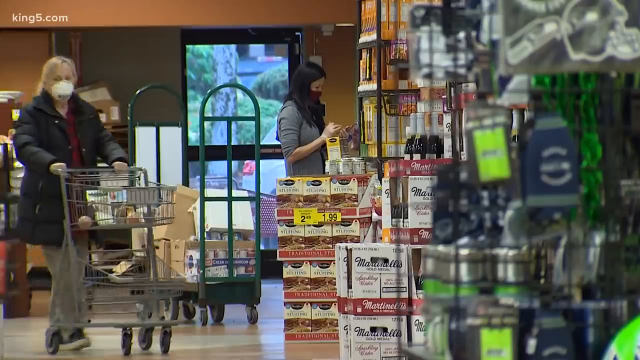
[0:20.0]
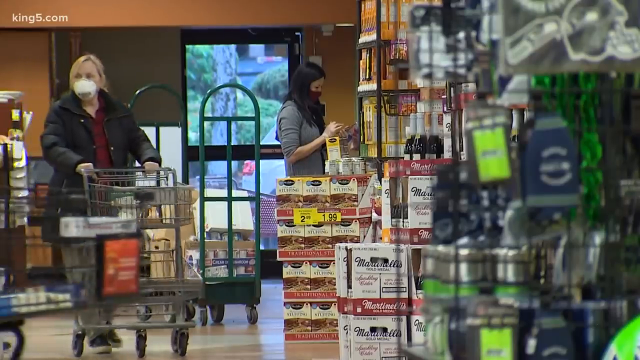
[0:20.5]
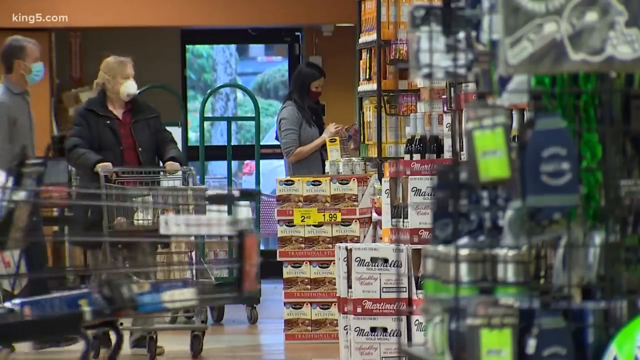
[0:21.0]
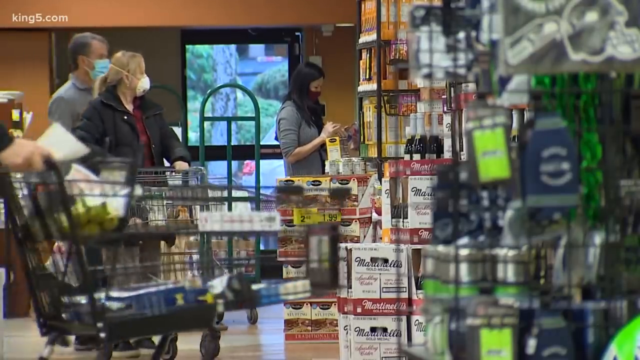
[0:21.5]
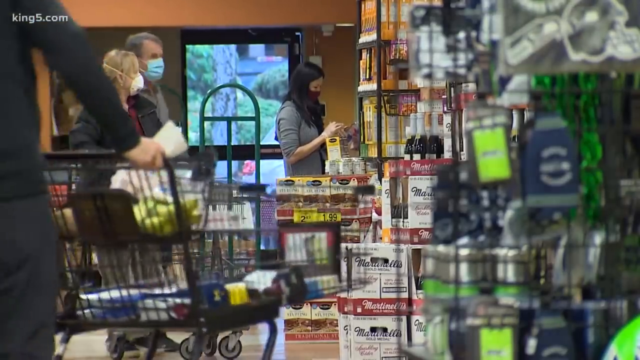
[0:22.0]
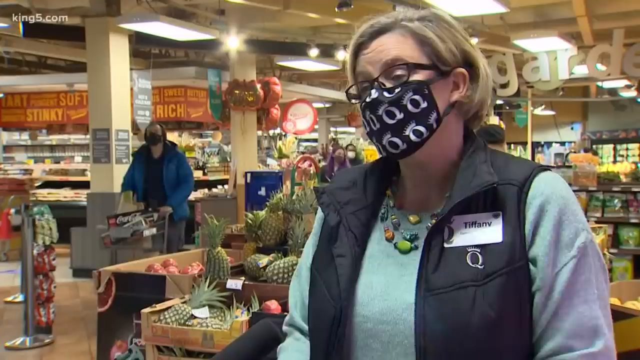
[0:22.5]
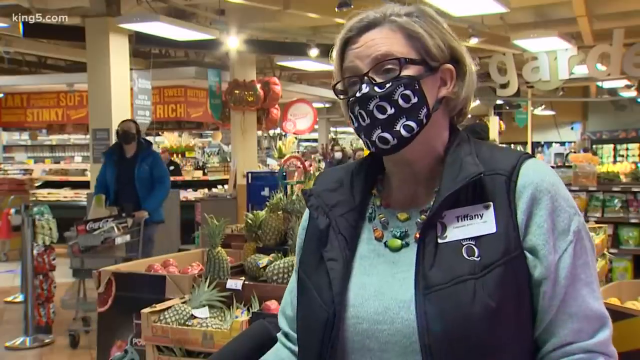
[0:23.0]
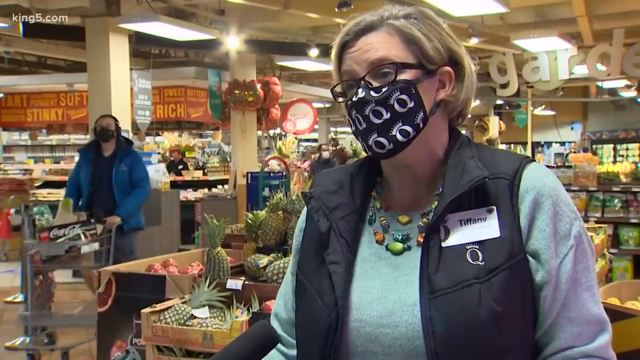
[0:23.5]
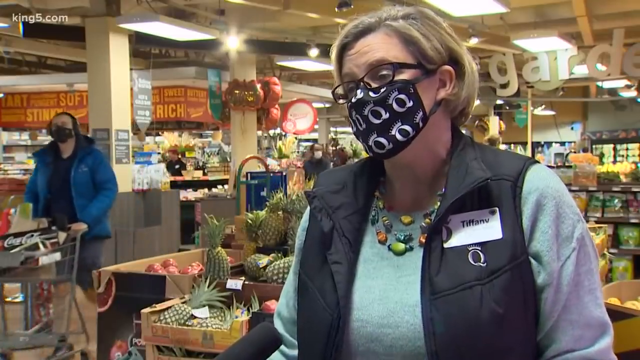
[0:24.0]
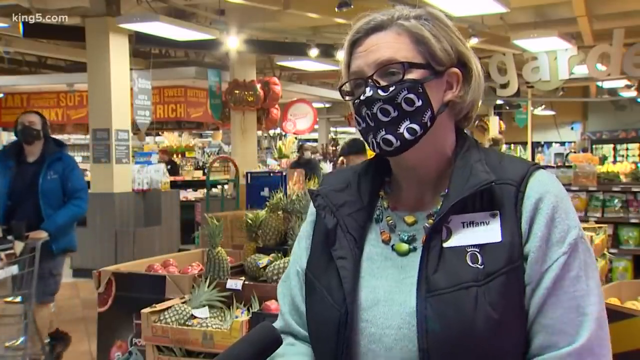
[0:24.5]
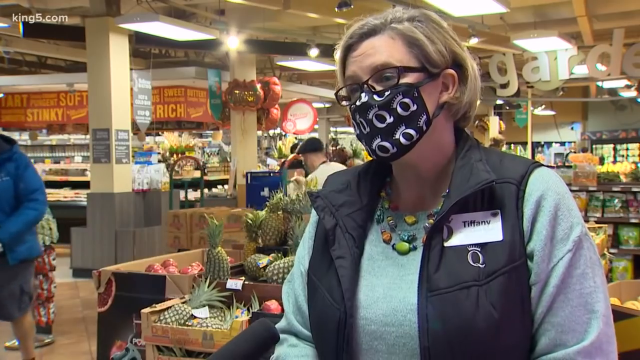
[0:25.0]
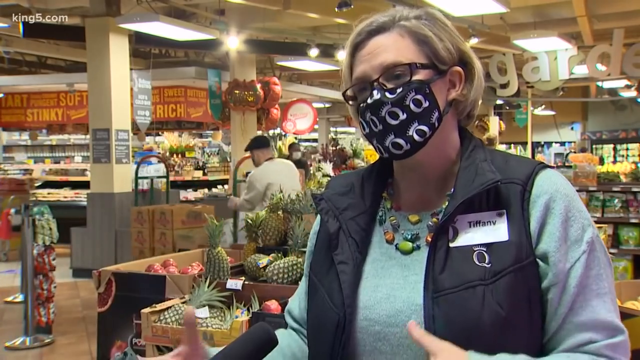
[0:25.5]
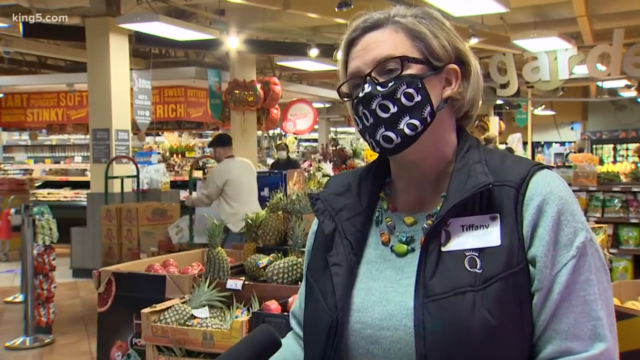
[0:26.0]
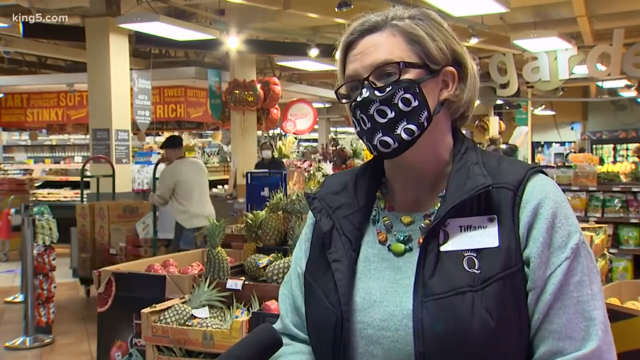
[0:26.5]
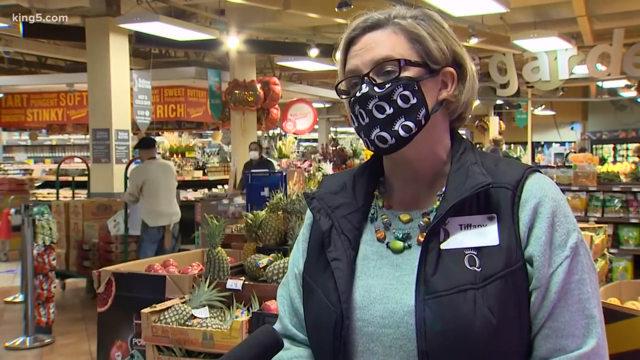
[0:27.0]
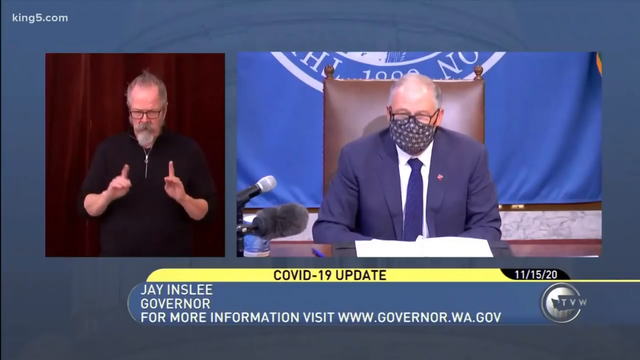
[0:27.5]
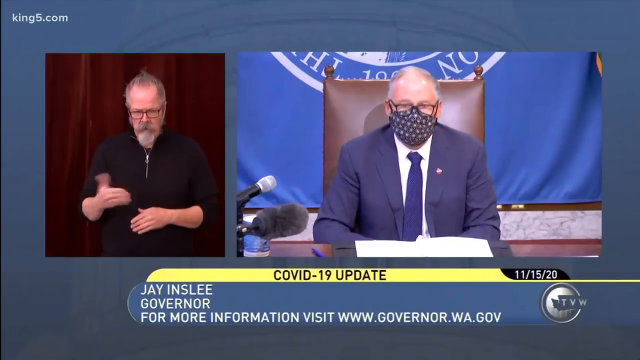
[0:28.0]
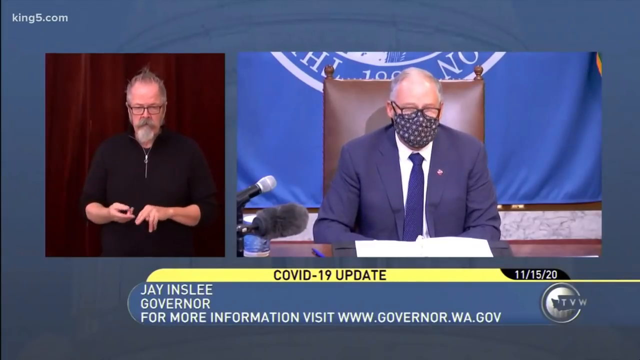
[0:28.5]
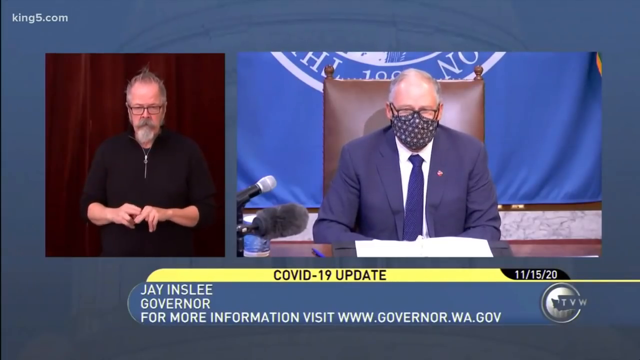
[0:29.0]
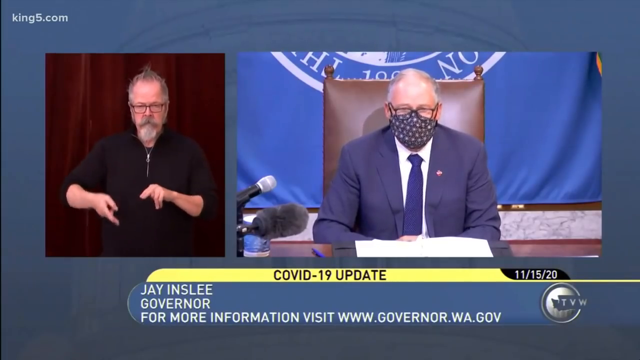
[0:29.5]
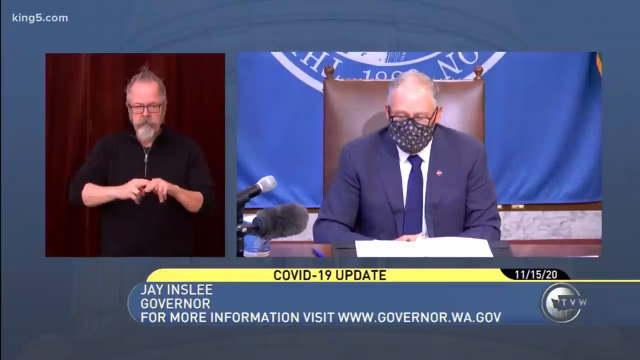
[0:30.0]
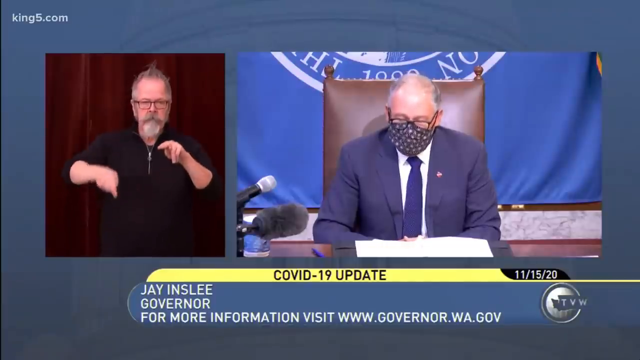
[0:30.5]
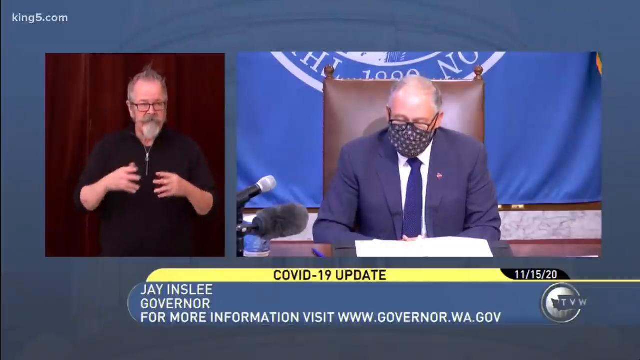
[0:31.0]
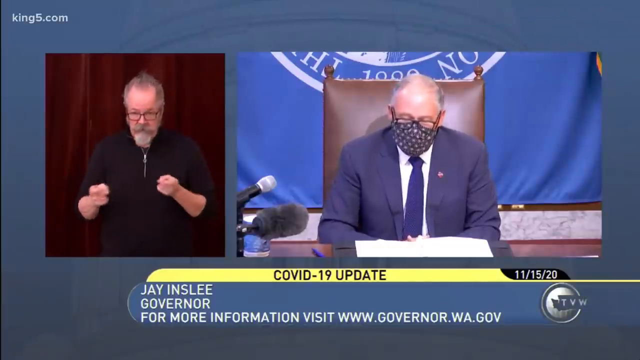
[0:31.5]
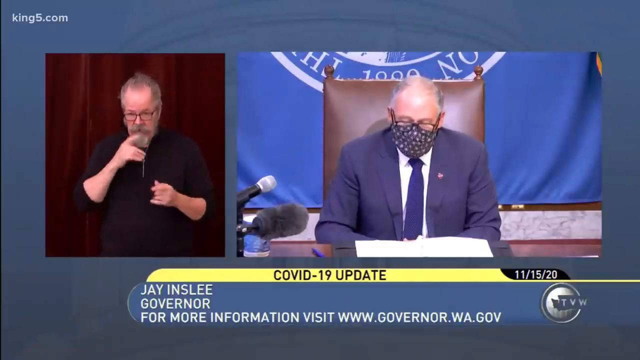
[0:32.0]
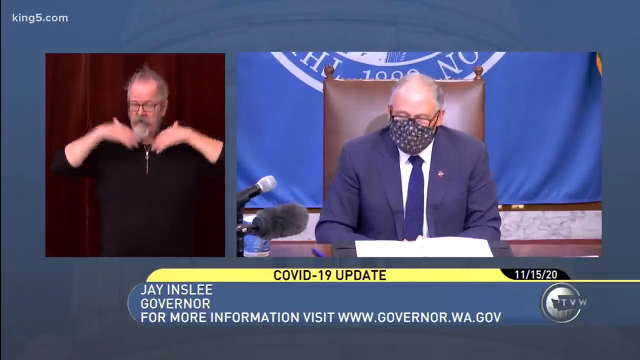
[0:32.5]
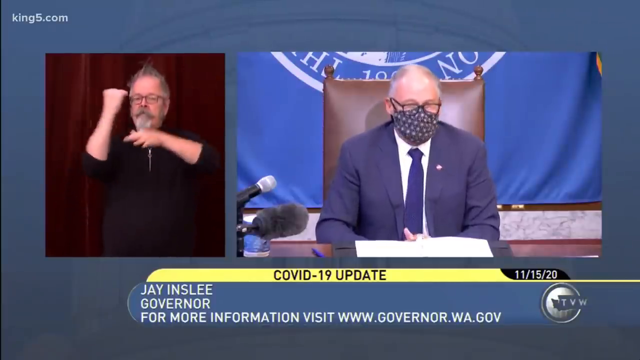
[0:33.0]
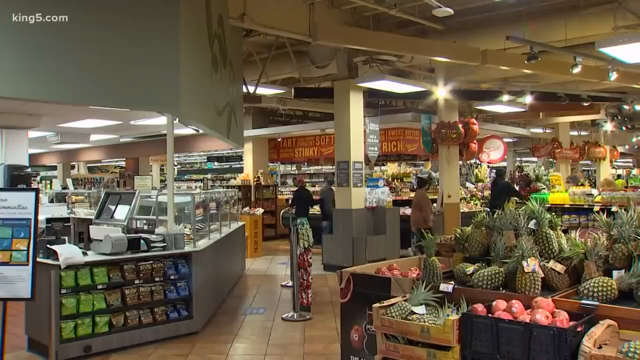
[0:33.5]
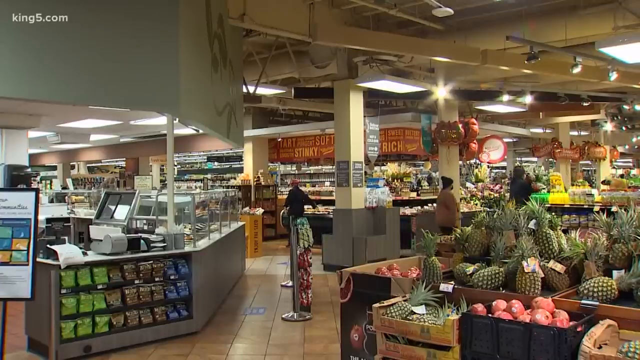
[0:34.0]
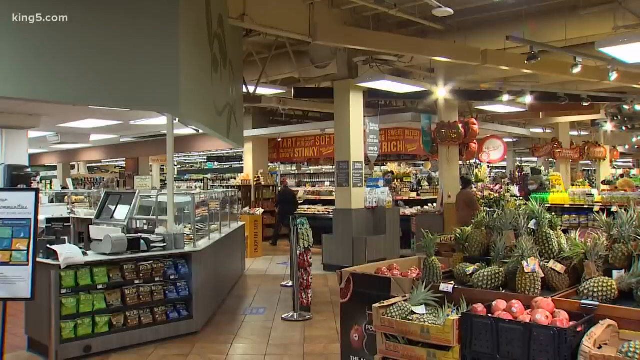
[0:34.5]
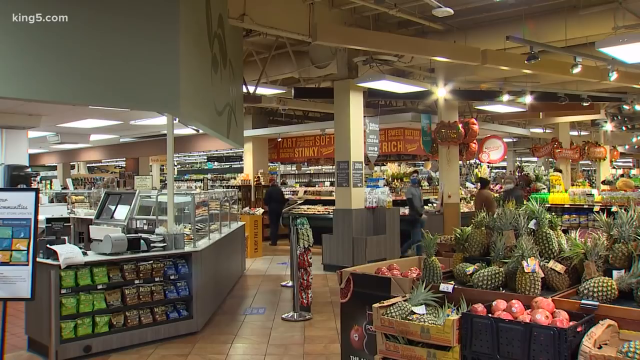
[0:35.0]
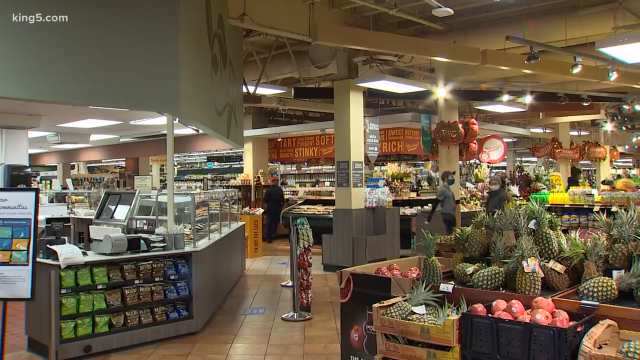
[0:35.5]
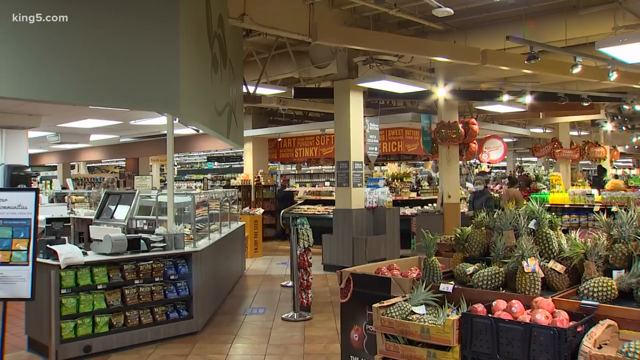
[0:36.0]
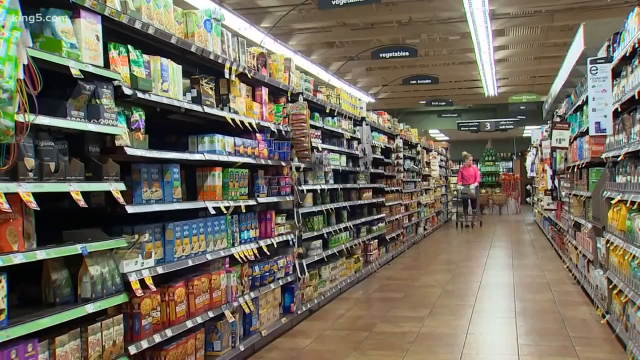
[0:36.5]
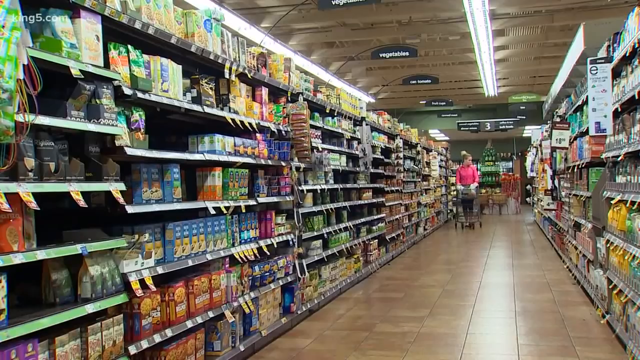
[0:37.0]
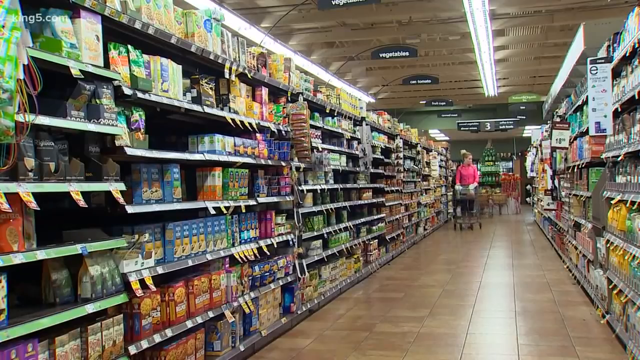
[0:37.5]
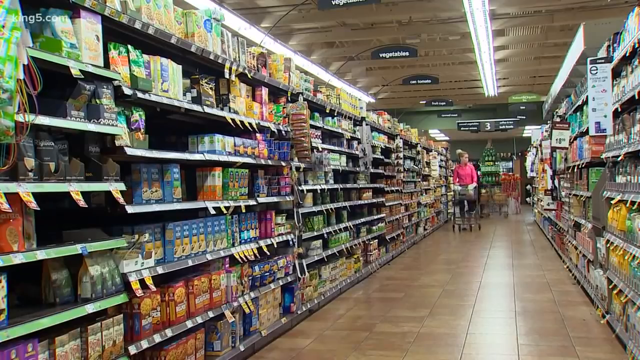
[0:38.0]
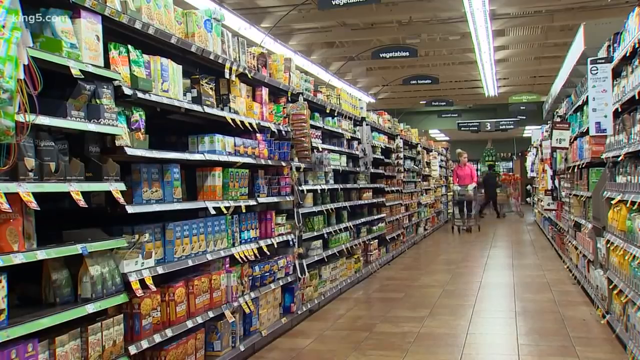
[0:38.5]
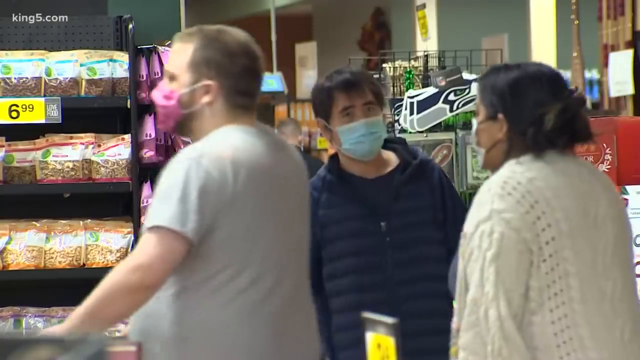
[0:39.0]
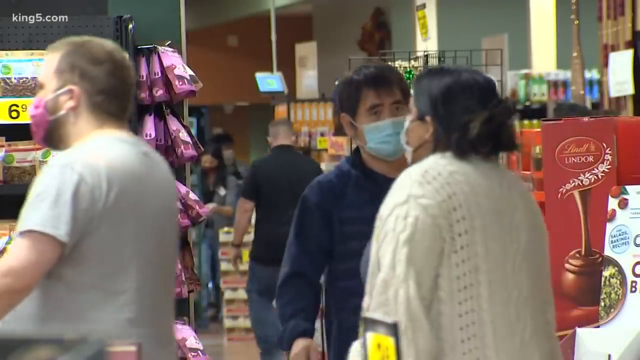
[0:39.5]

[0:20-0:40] People continue shopping as more people with shopping carts come onto the screen from the left side, preparing to shop. It cuts to a woman being interviewed who wears a name tag, showing that she works there. She wears a black mask with a black and white letter Q and a crown on it, dark glasses, short blonde hair, and a teal shirt with a black vest on top. Next, governor Jay Inslee gives a COVID-19 update; to his left, in another square, a translator does sign language, making two people on the screen, against a marine blue background with information along the bottom. The video cuts back inside the grocery store, where people walk around, pineapples are near the camera and the deli section is to the left. In another aisle, a blonde-haired lady with her hair up in a bun and a bright pink jacket pushes her cart towards the camera while someone crosses the aisle at the back. Another, closer angle shows more people wearing masks walking through the grocery store.